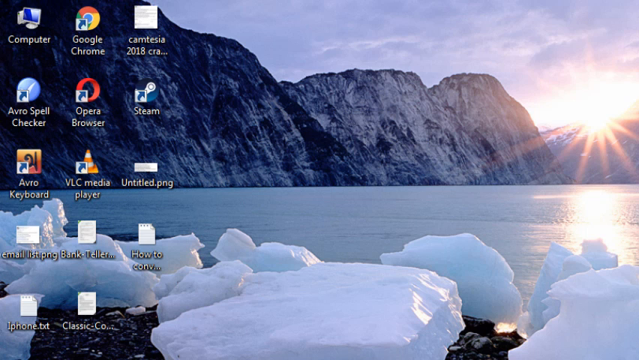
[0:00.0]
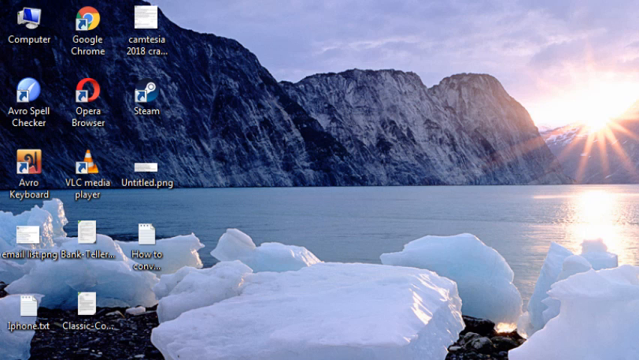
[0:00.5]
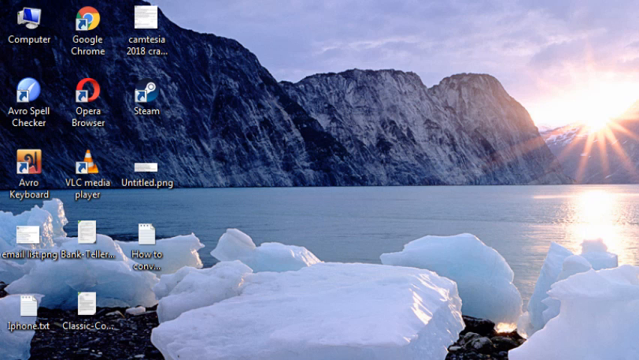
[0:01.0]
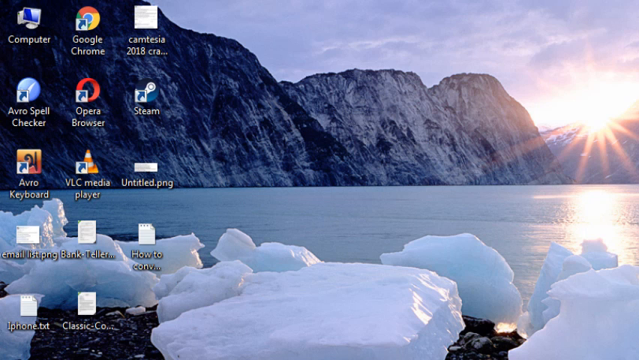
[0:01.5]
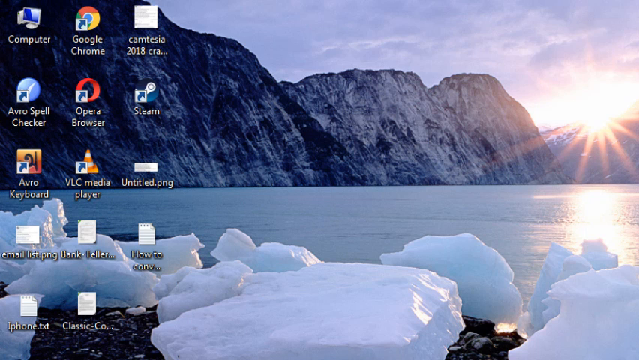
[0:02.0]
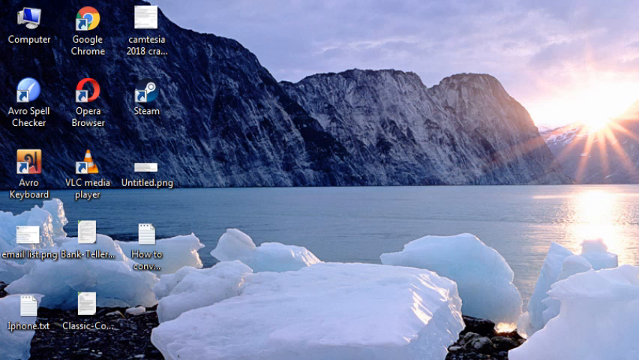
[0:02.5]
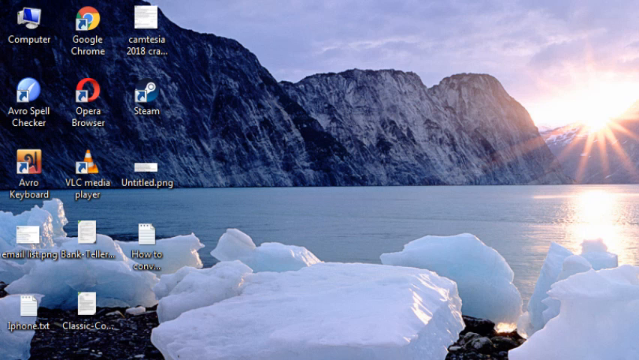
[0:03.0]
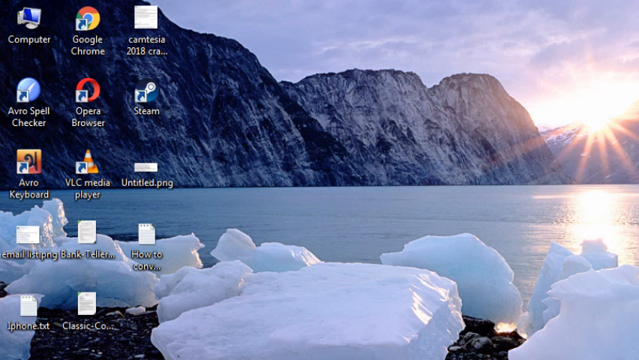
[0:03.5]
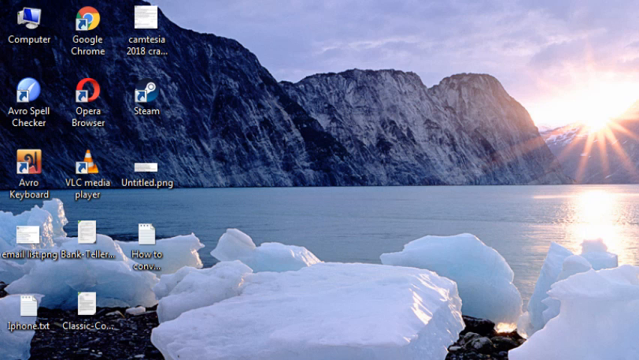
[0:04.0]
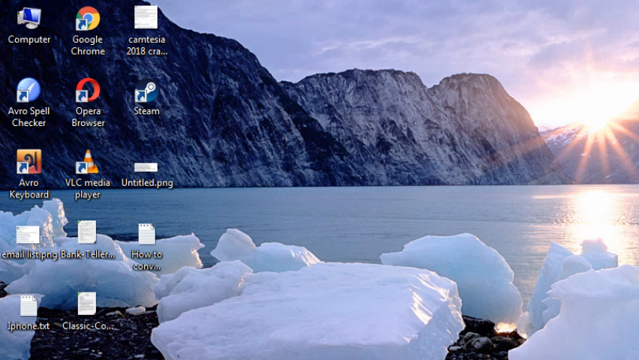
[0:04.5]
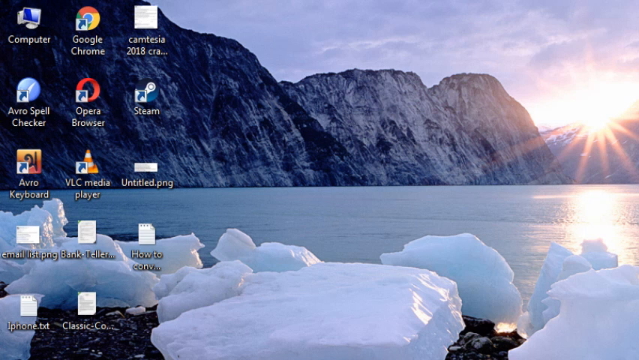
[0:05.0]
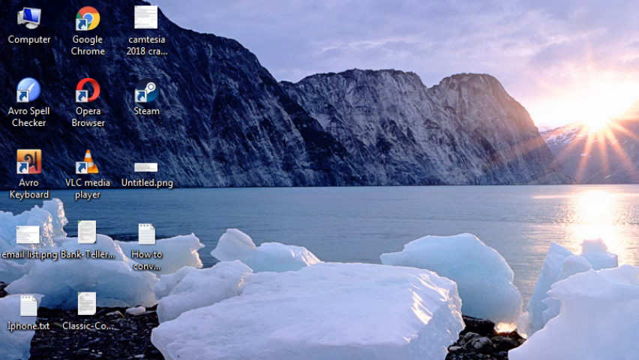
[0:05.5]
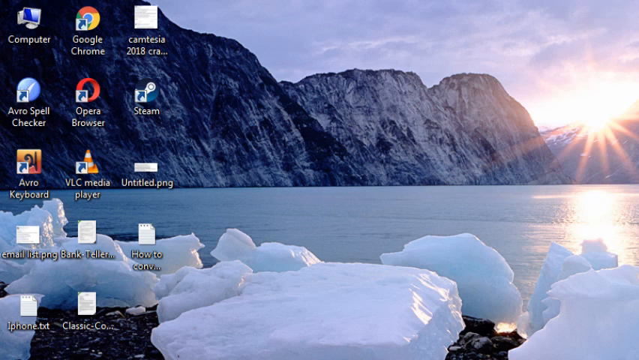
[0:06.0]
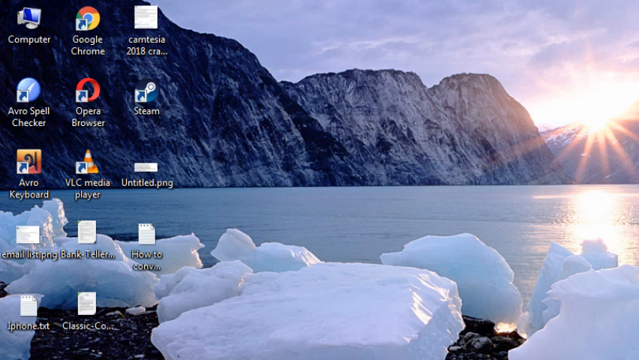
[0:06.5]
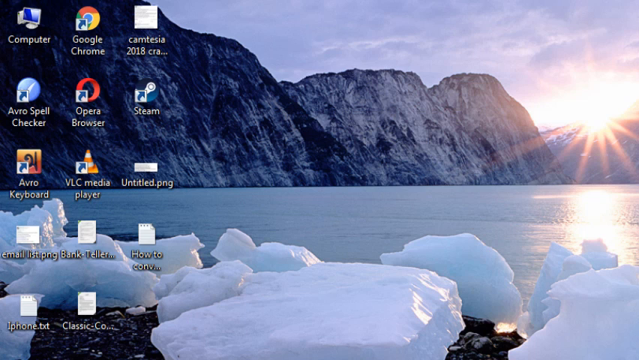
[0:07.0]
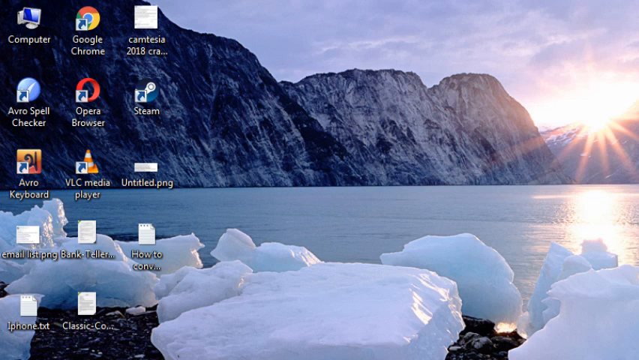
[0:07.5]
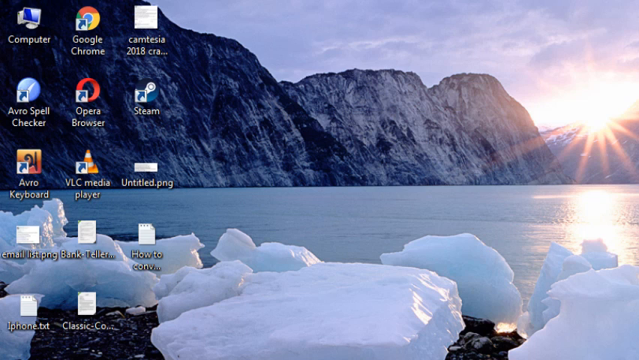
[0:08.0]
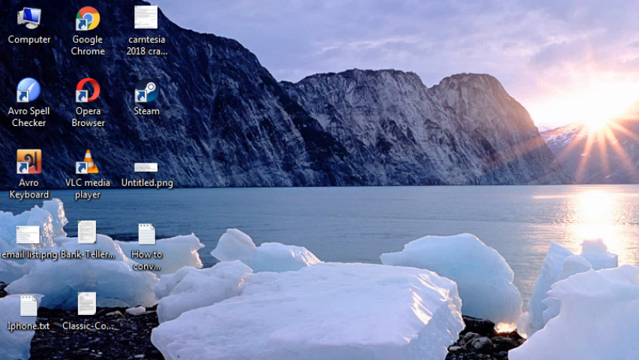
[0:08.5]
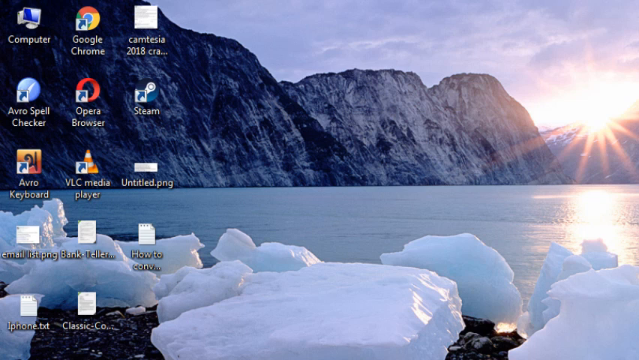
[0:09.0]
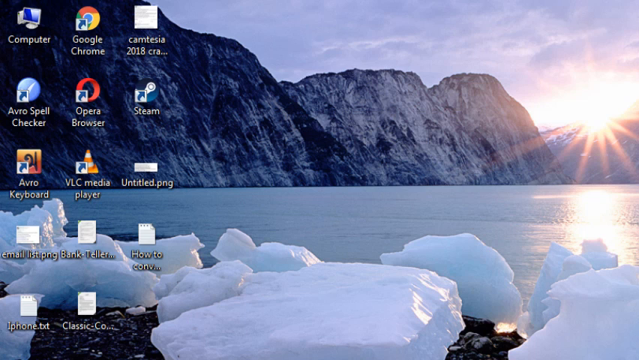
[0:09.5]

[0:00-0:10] The video opens on a Windows desktop. Icons run down the left side, basic ones such as the computer, Google Chrome, Opera, a media player, Steam, a few images and text files, and something like a spell checker and a keyboard app. The desktop background image looks like a glacier: there are cliffs, and the view seems to overlook a river with cliffs on one side, or maybe an ocean. There is ice, and the scene looks icy and cold. The sun is either setting or rising, and the photo has a starburst effect.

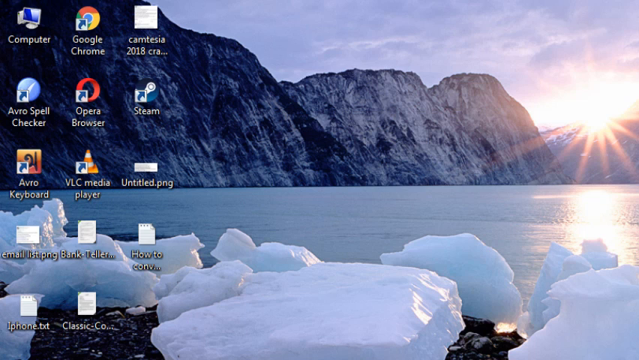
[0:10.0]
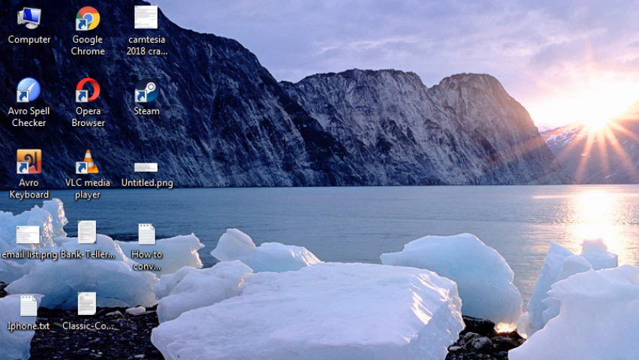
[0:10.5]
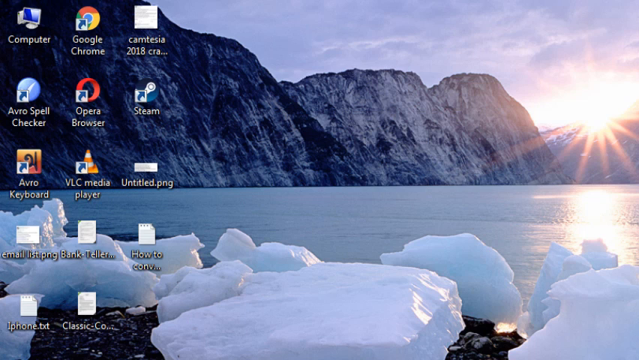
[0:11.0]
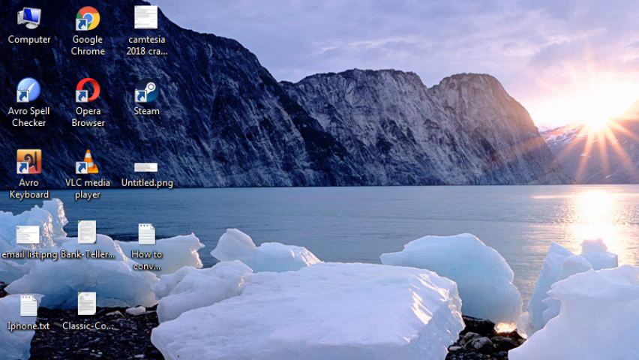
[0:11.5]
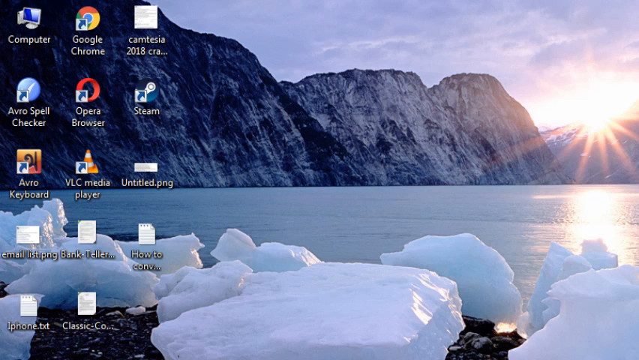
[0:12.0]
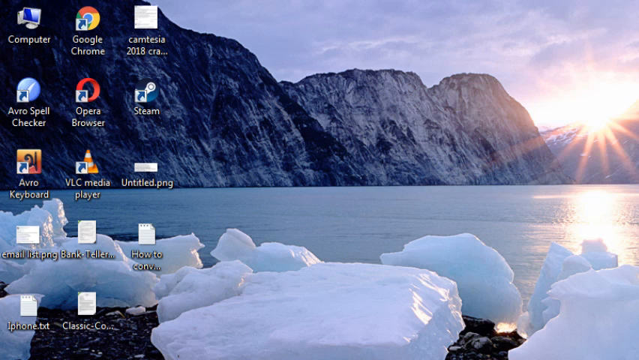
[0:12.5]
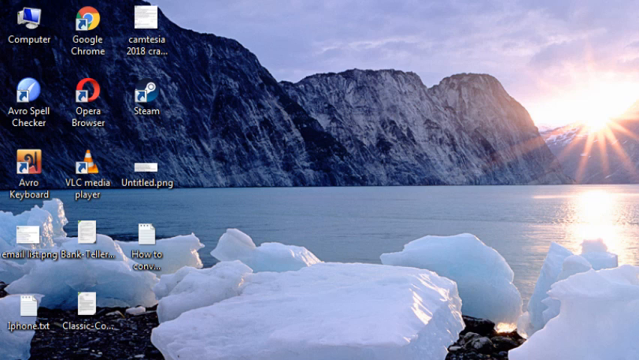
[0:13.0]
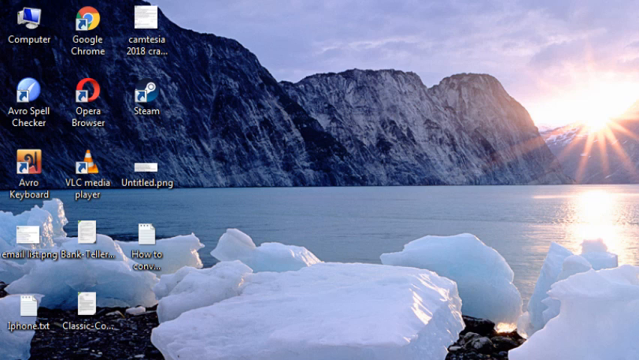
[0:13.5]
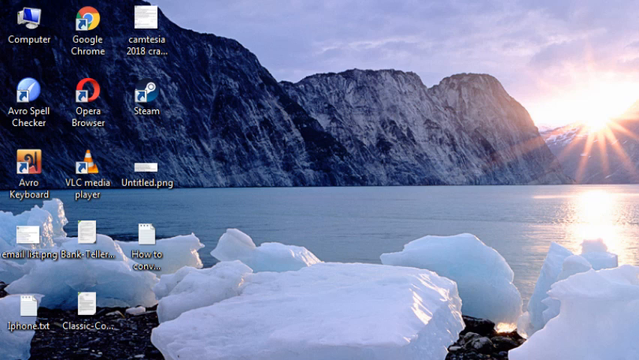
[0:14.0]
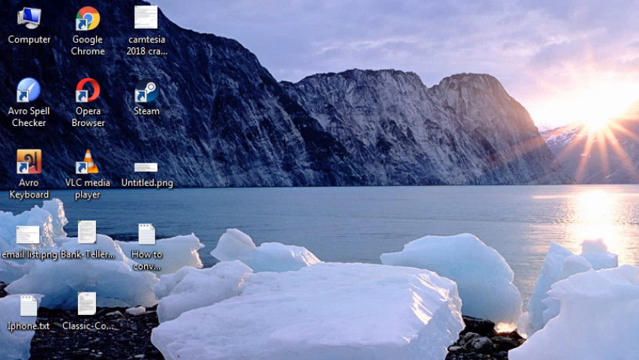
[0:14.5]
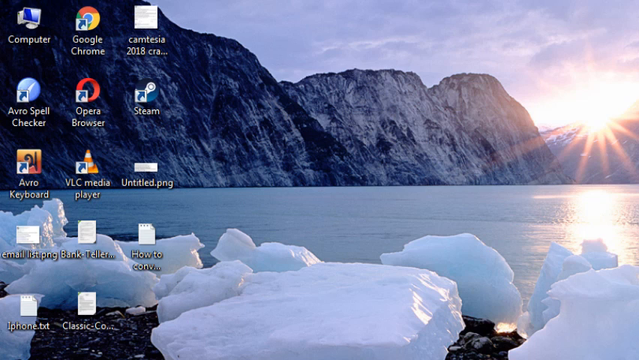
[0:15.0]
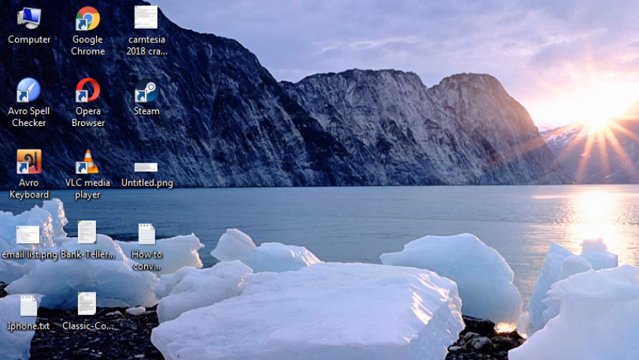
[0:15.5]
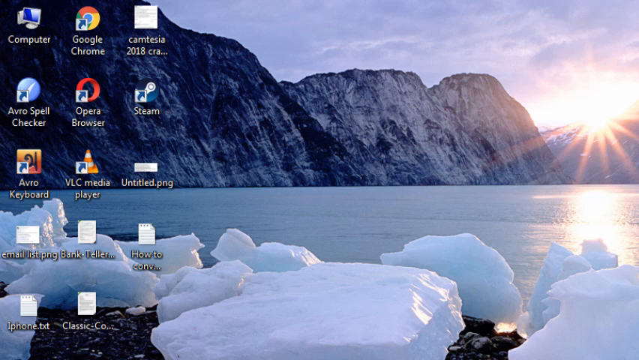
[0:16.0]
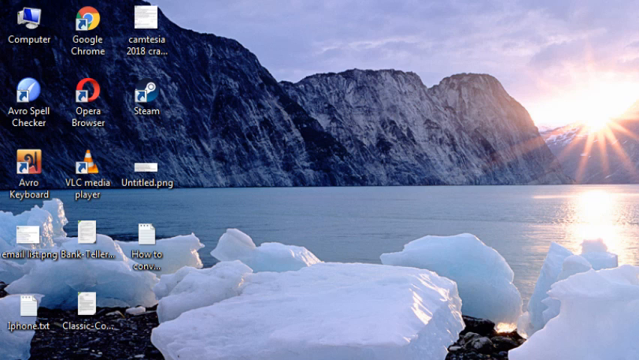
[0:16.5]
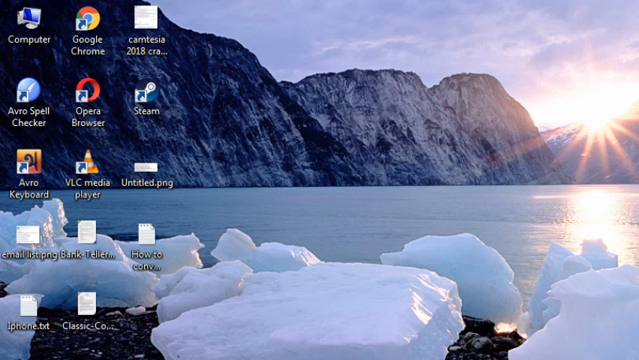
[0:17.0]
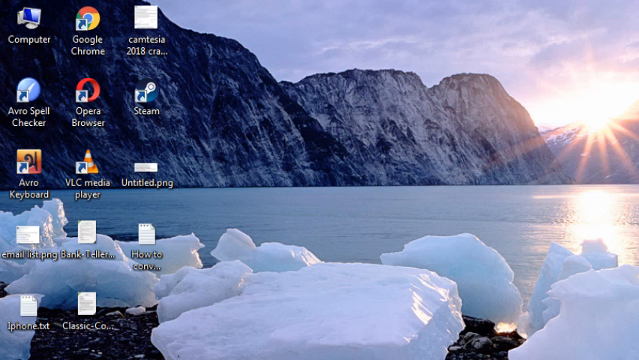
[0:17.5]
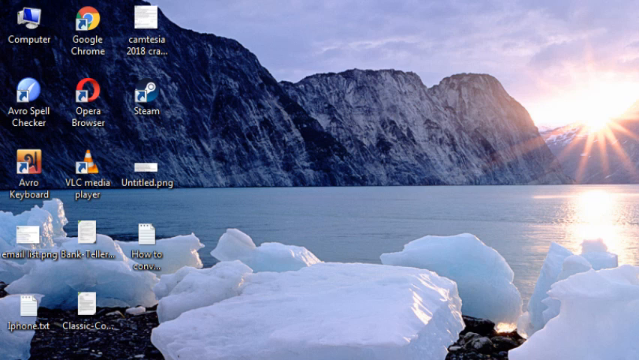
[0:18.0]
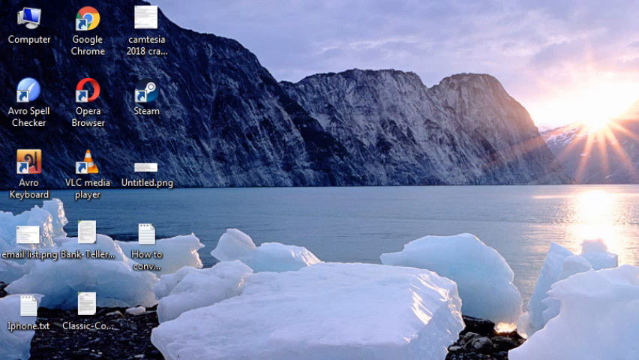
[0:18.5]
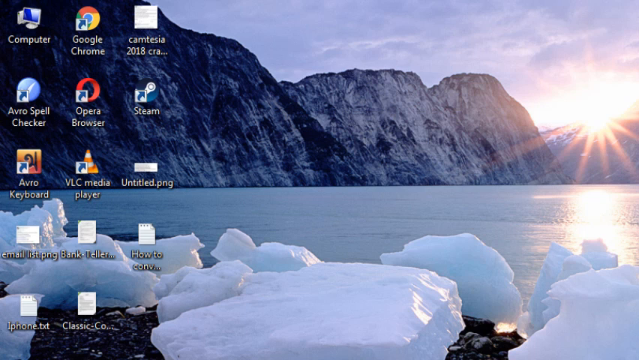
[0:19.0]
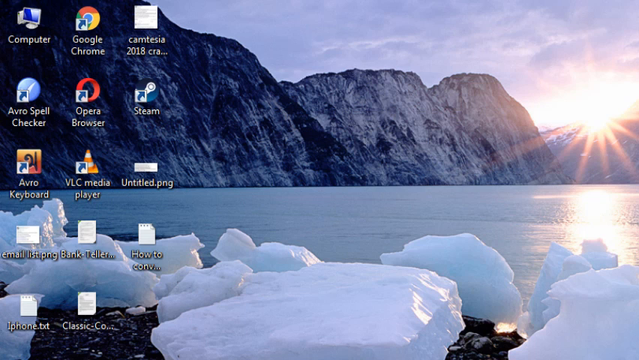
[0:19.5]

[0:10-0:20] The desktop remains on screen and nothing else happens. Only the background photo and the icons to the side are visible; the background is a still image, not a moving one.